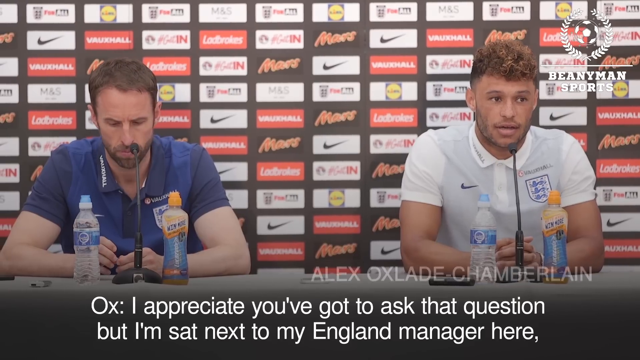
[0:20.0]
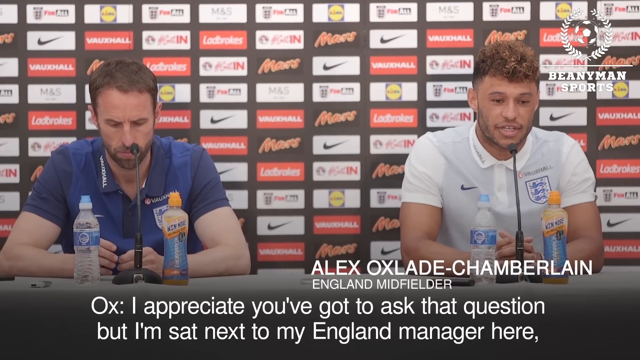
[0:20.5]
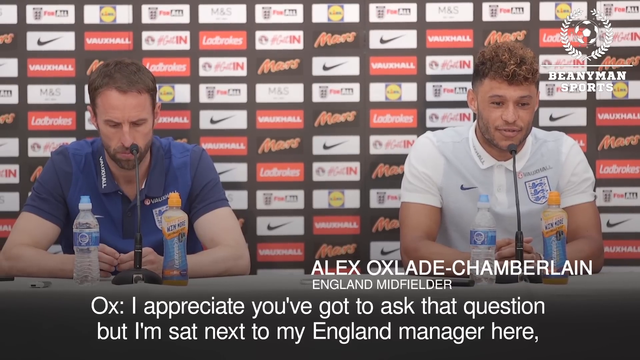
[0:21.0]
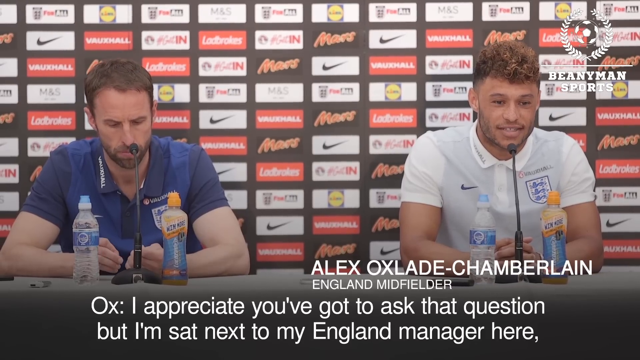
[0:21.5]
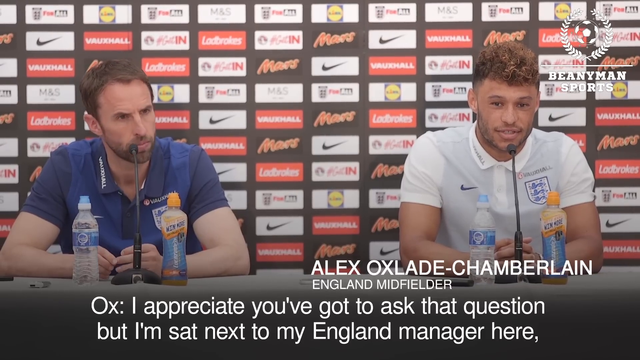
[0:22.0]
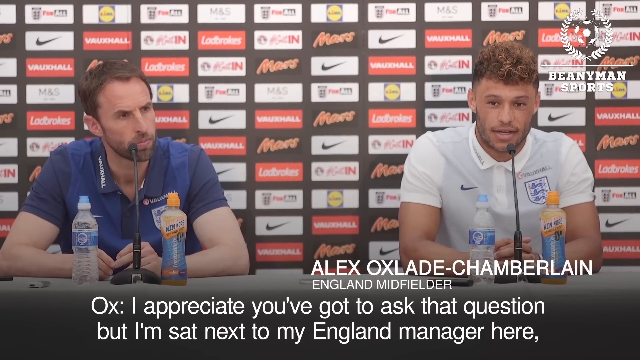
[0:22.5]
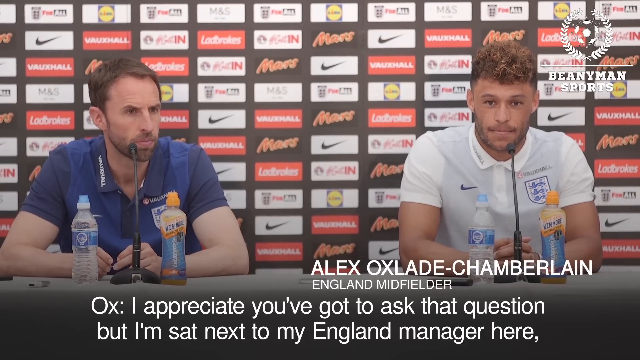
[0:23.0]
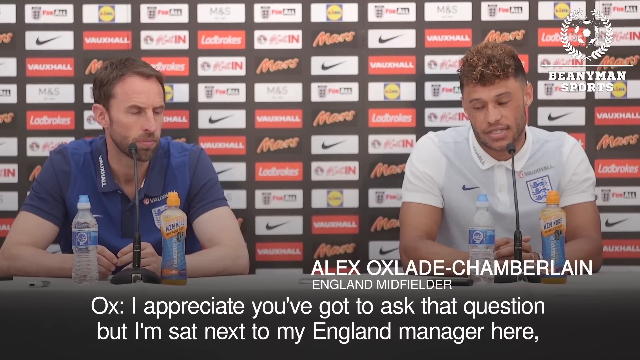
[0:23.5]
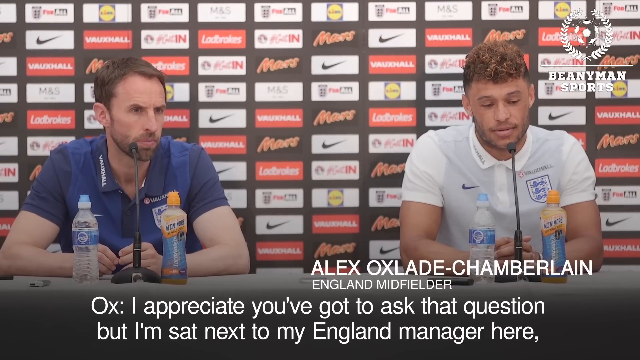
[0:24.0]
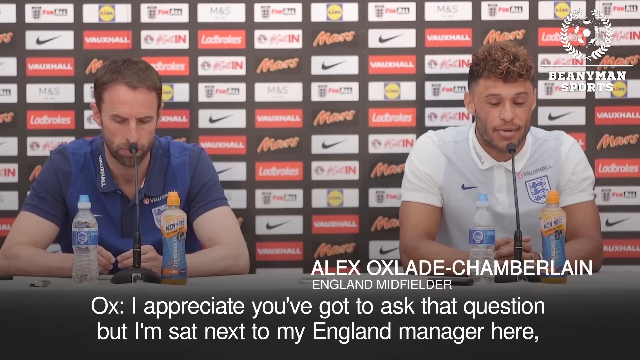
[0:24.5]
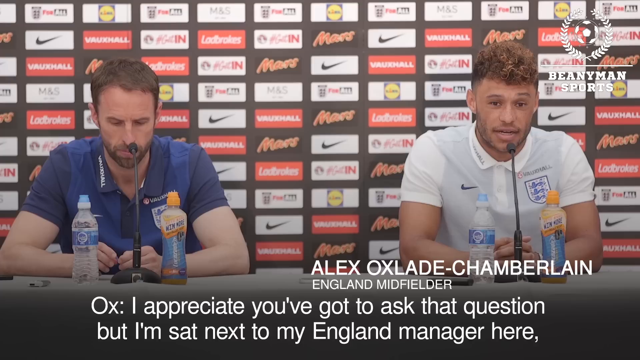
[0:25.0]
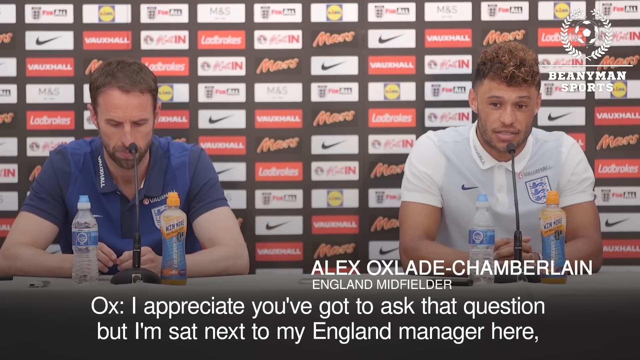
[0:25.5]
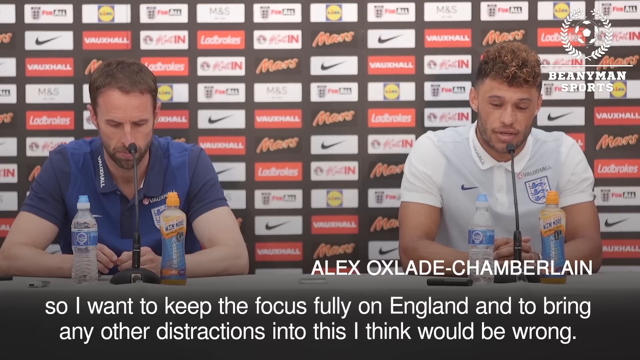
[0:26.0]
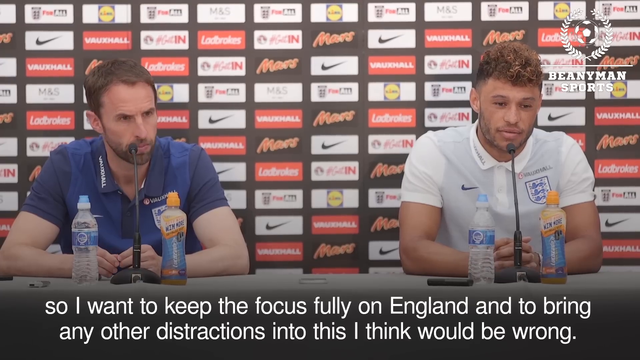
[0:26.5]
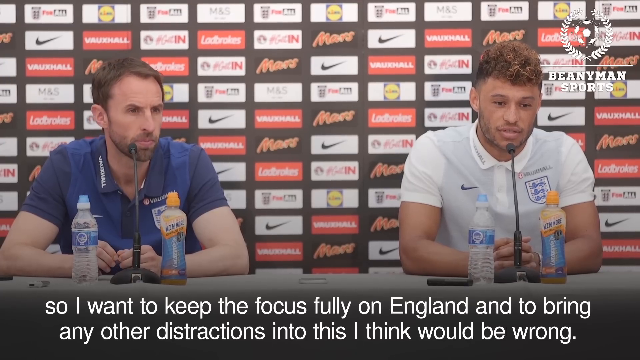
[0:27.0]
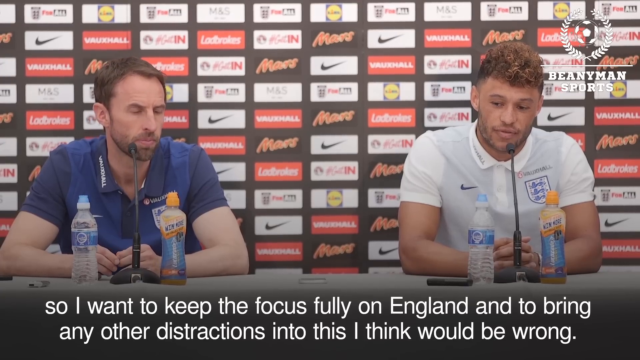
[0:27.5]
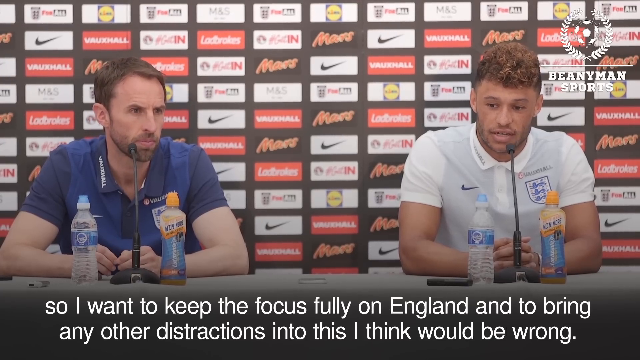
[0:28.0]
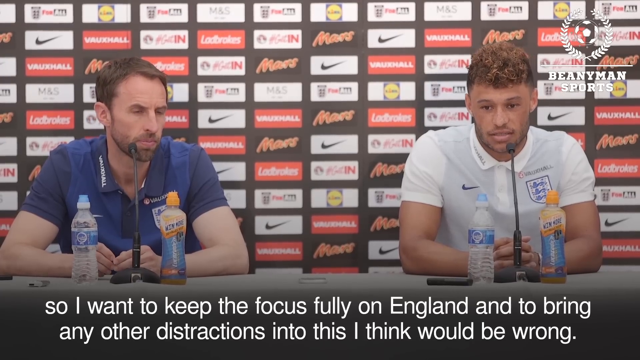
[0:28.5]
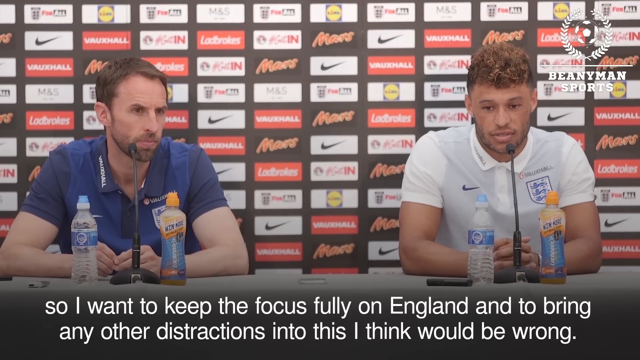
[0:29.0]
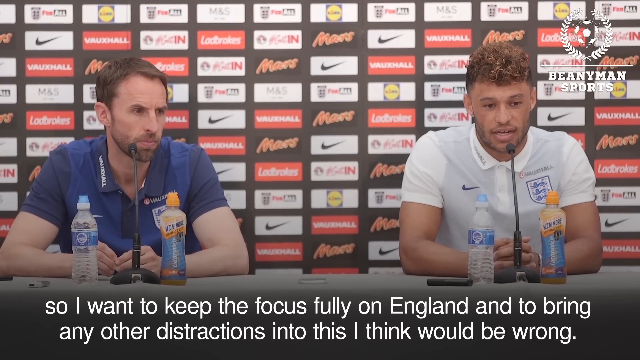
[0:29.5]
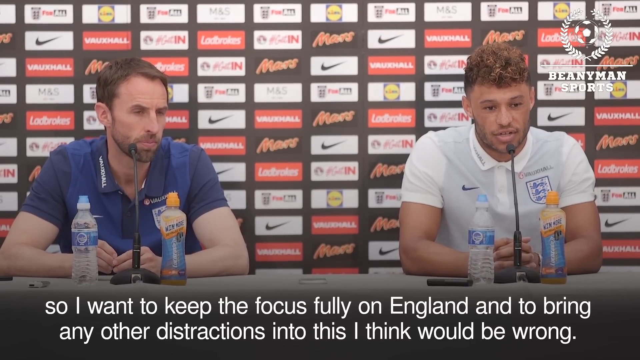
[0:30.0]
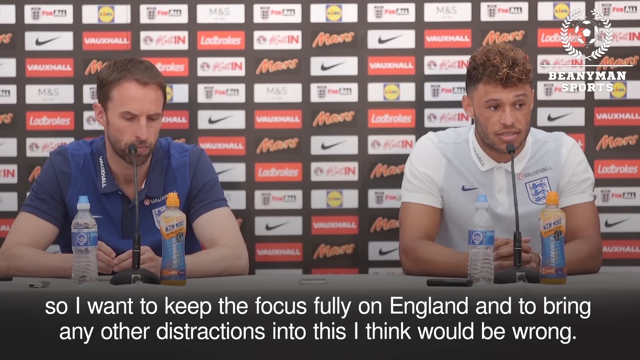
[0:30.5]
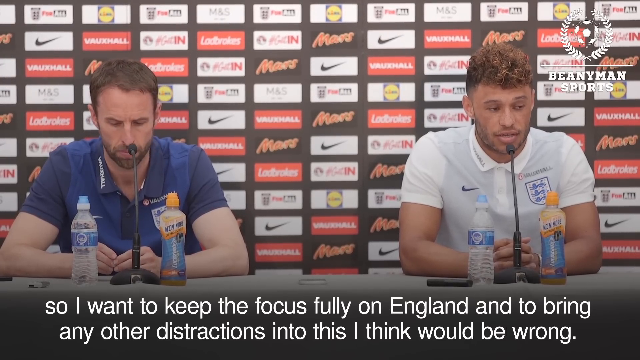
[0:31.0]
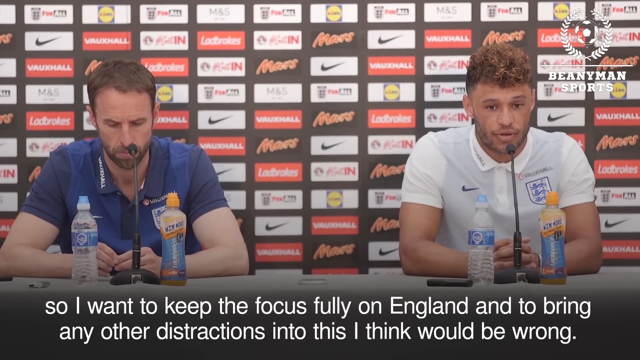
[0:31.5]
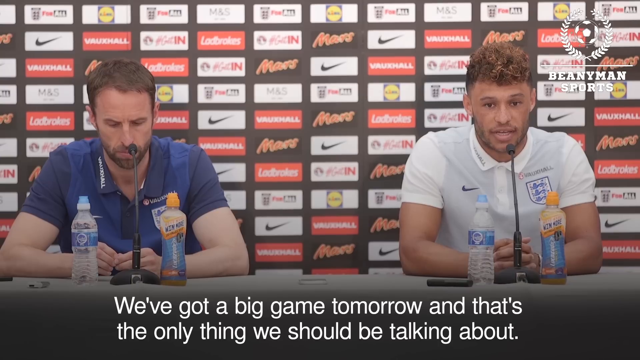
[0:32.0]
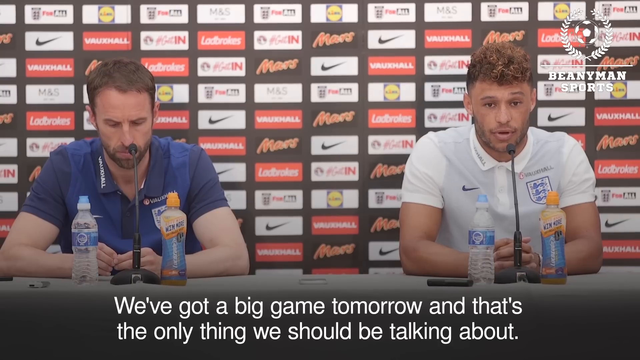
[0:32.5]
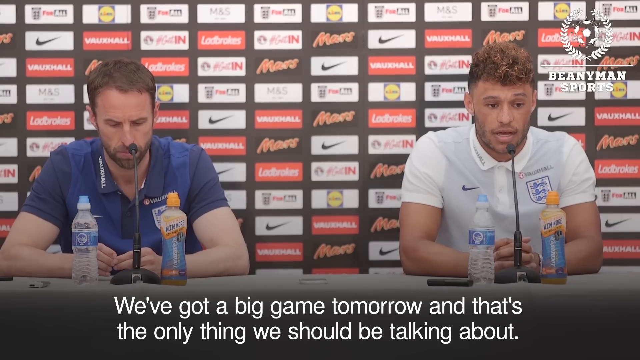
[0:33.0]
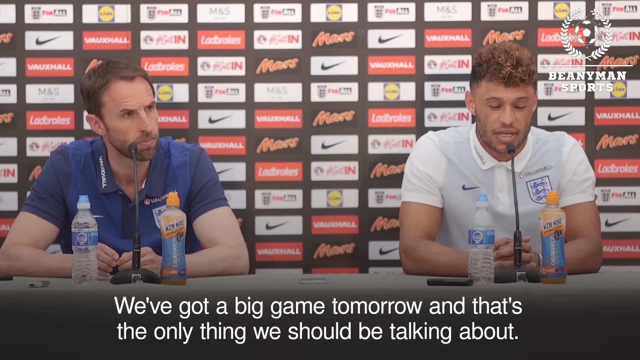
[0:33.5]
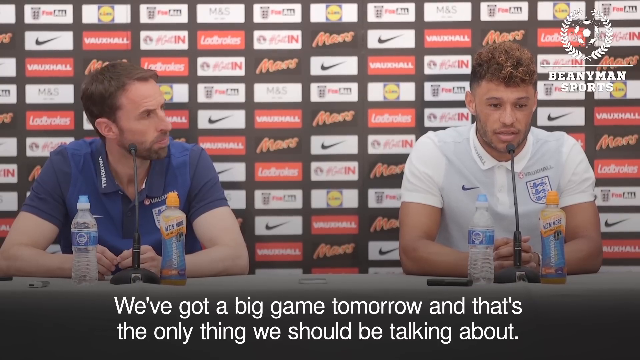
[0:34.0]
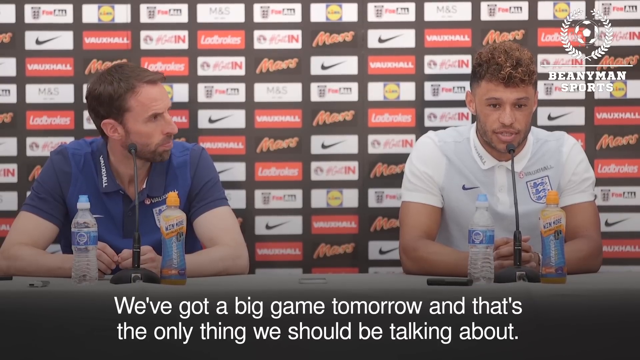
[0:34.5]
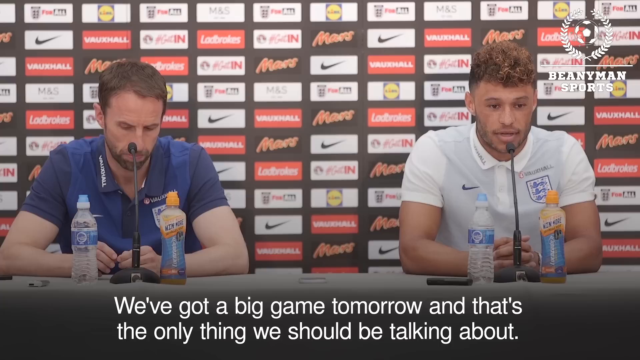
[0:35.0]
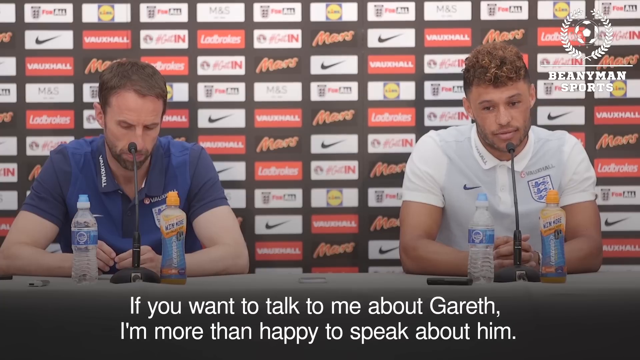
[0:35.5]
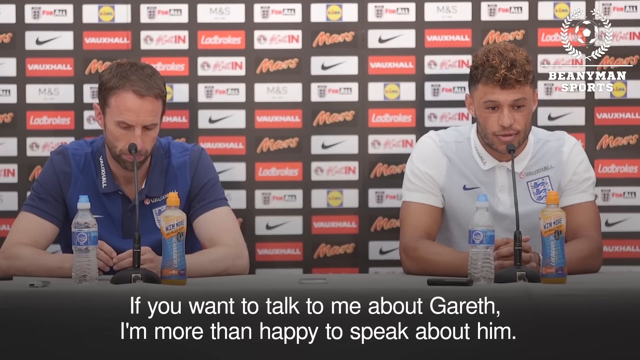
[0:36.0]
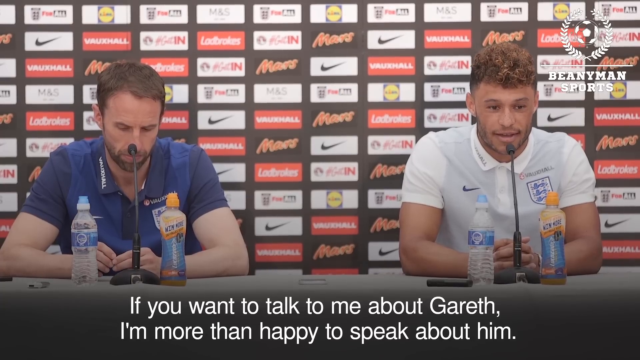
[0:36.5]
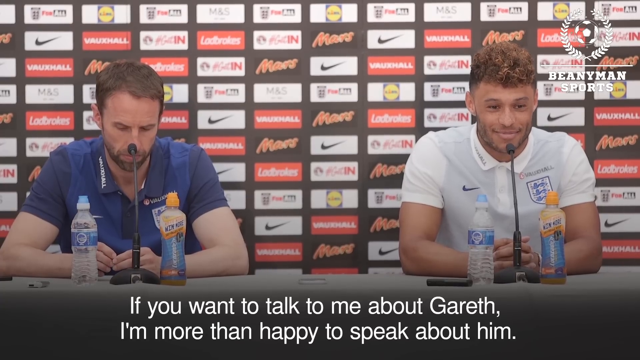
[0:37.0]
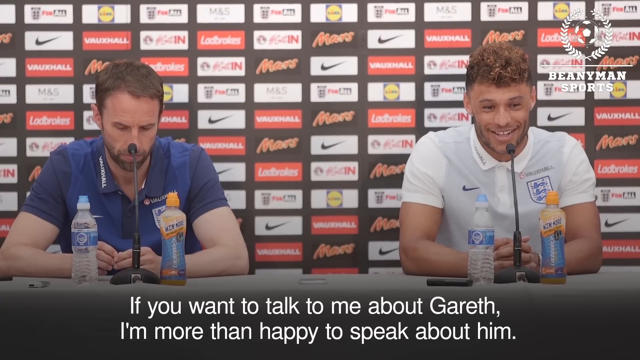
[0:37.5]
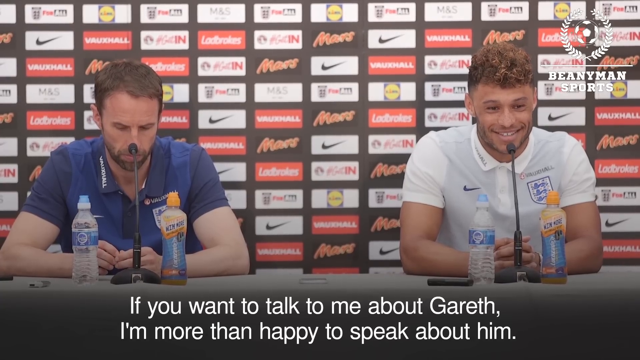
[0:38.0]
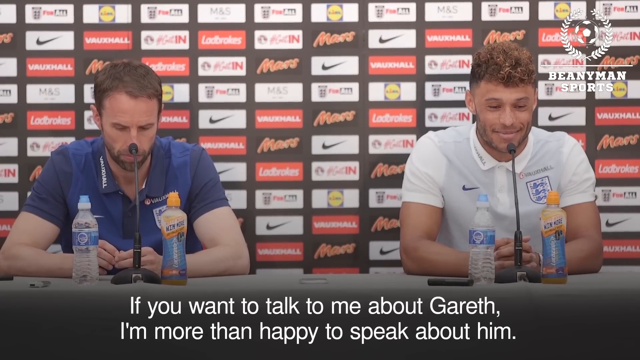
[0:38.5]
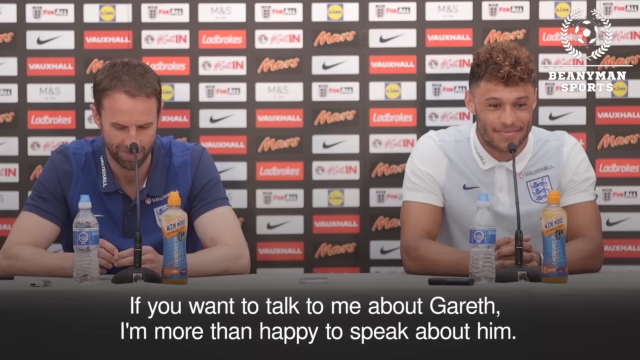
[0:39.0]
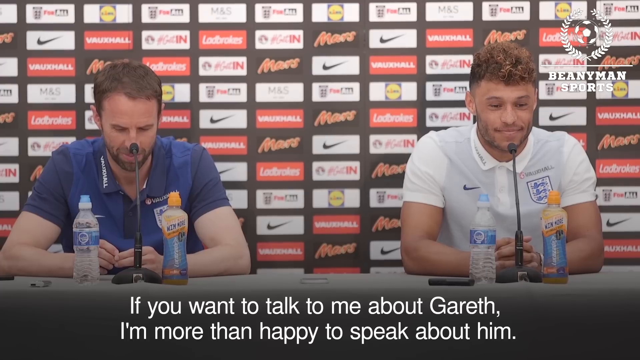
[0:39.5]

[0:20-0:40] A Beany Man Sports video shows what looks like a press conference with two soccer players. The man on the left wears a blue polo-style team shirt with the Nike logo on the right chest area and the team logo on the left side. He is about mid-30s, with short dark or medium brown hair and a beard. The man on the right side of the screen wears the same type of shirt in white, with the same emblem on the right chest area and the Nike logo on the left side. Behind them is sponsor advertising in rectangular shapes, almost with a brick look, like the way bricks are put together. The reporter asks, "How good is it from a player's perspective that it has all been sorted and put to bed?" One of the men answers, and a caption shows that the man on the right is Alex Oxlade Chamberlain. The text reads, "I appreciate you got to ask that question, but I'm sat next to my England manager here," so the man in blue is the manager of the man in the white shirt. He says, "so I want to keep the focus fully on England and to bring any other distractions into this, I think would be wrong," and goes on, "We've got a big game tomorrow, and that's the only thing we should be talking about."